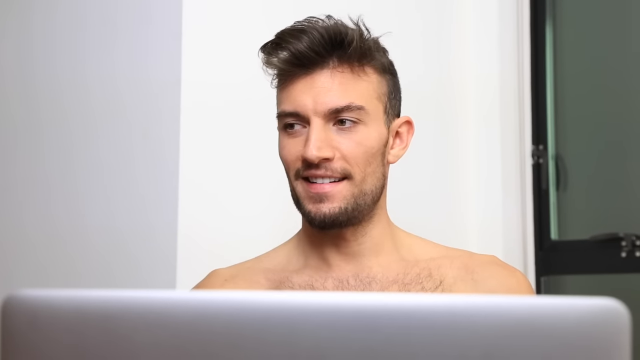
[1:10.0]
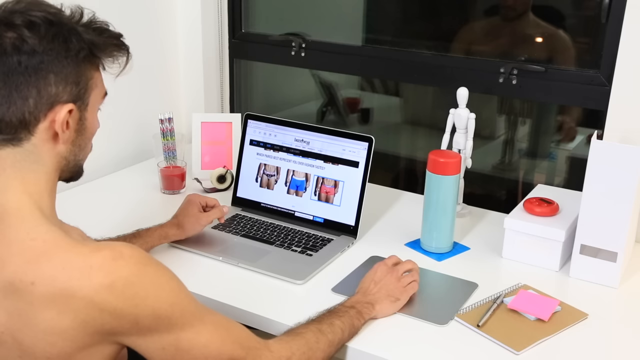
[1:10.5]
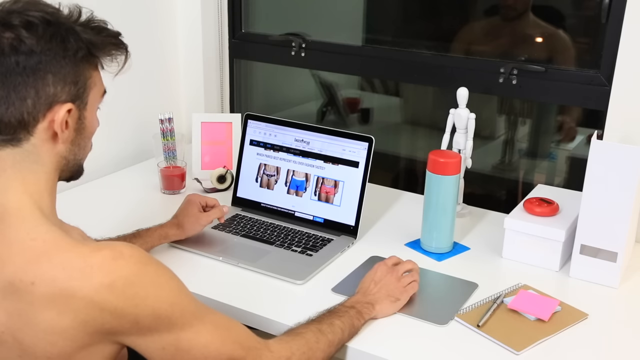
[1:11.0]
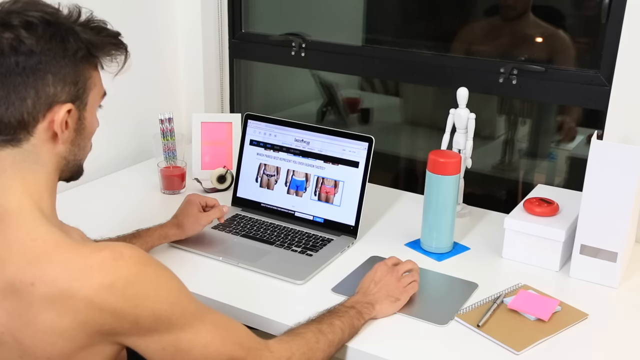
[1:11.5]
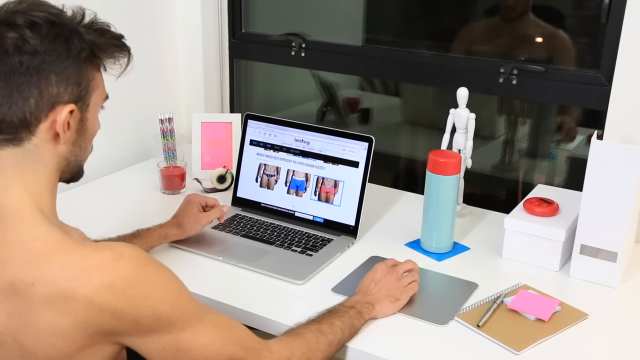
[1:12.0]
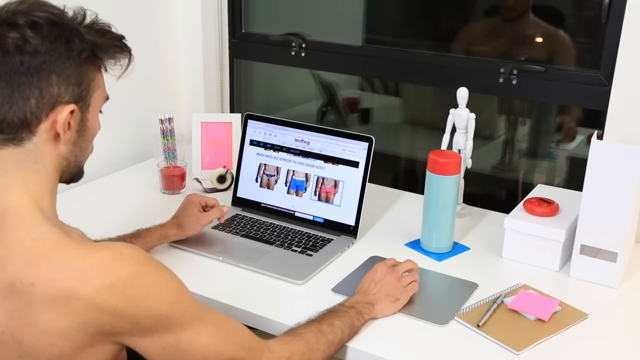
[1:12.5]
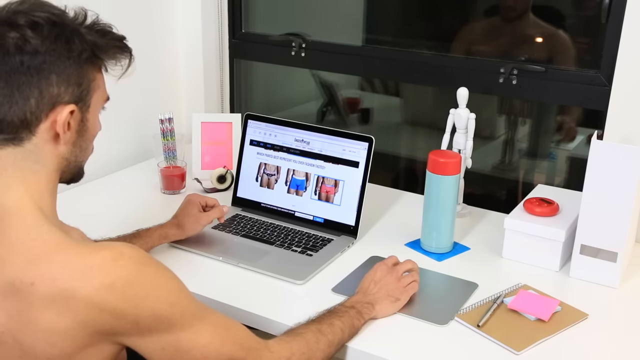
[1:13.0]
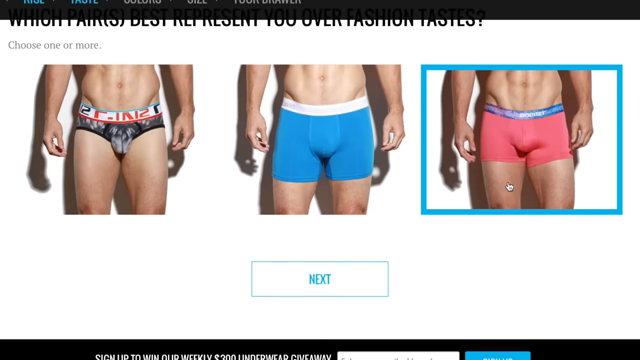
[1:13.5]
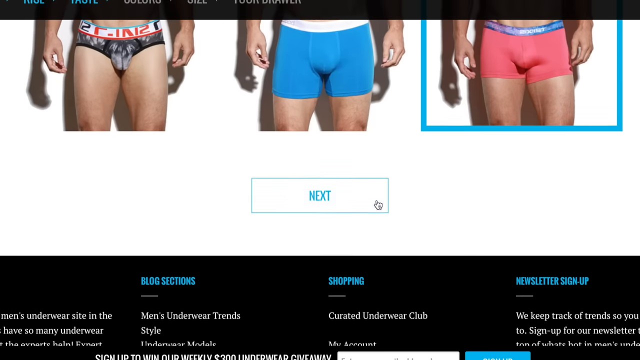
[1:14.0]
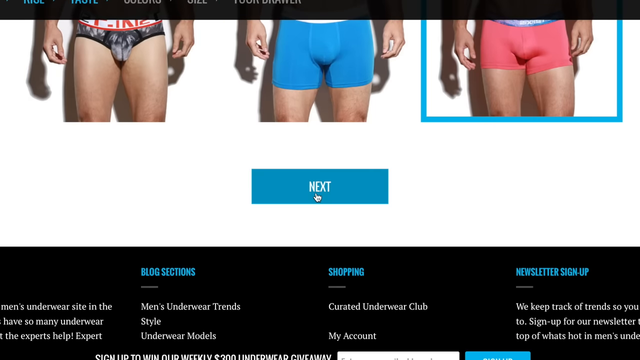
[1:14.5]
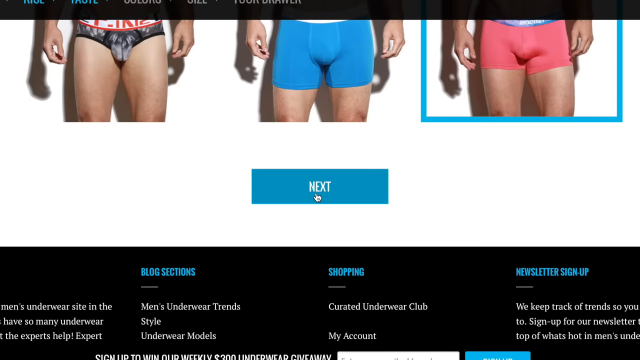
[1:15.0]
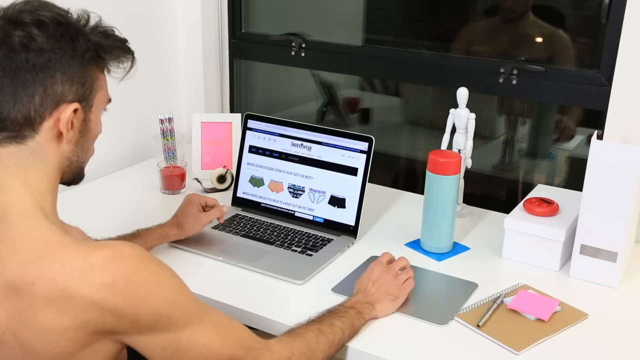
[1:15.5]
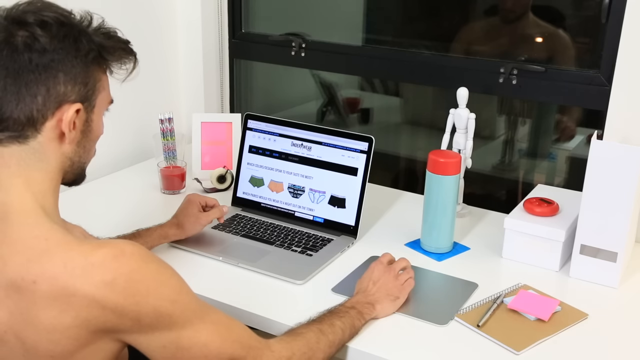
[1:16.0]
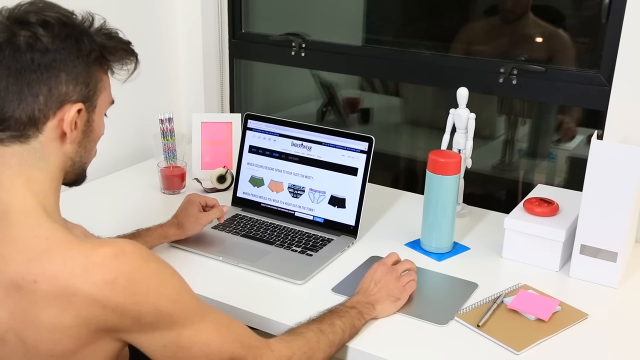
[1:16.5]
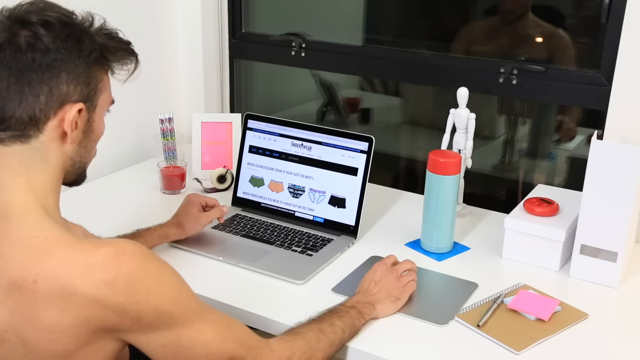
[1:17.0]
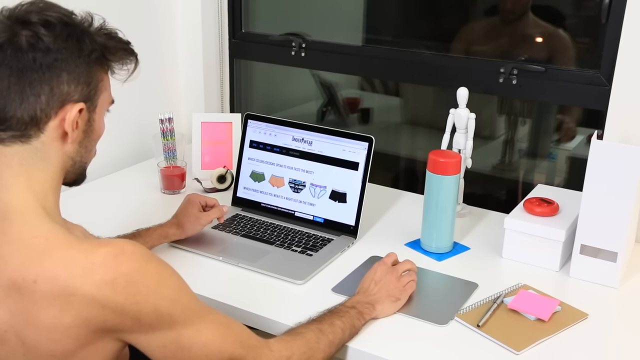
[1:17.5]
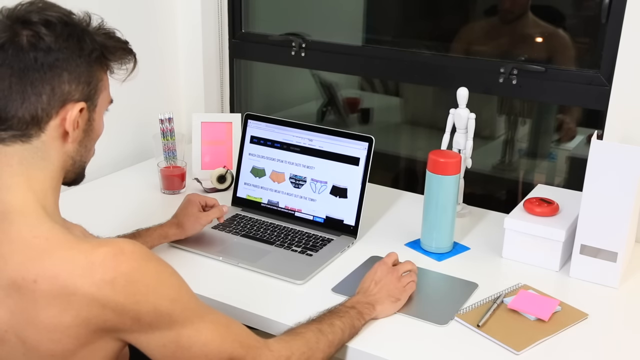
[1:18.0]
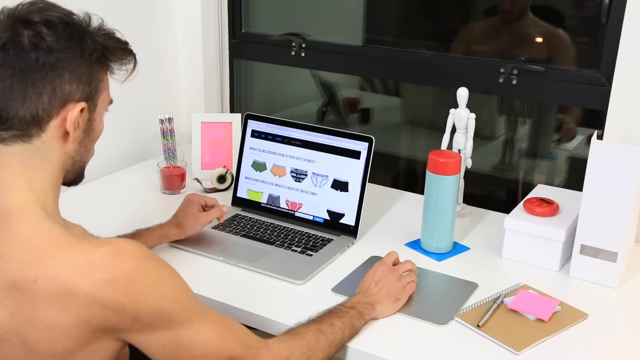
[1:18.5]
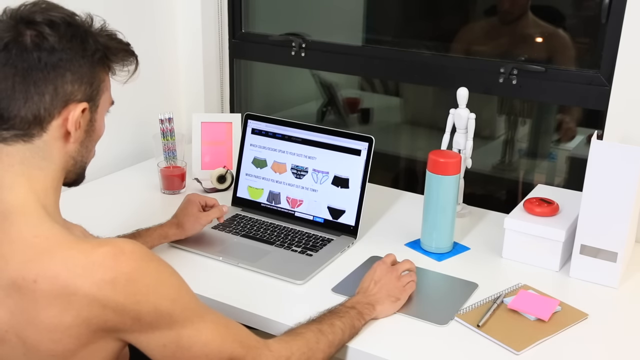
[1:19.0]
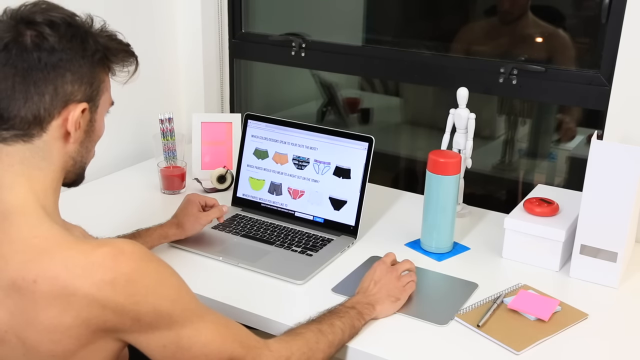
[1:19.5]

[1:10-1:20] The focus stays on the man, who still has no shirt on his upper body. He is shown at the laptop scrolling through the men wearing underwear. The view moves to the laptop as next is clicked and another page opens, and then next is clicked again and another page opens. There is a bottle of water and a white book on the table. The man scrolls through different types and designs of underwear, seen from a distance; the words under the underwear are not clearly legible. Then the man is shown looking aside in front of the camera, with a white wall in the background, and the camera focuses on him.